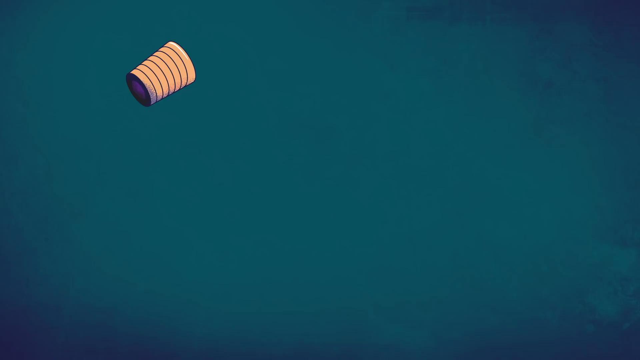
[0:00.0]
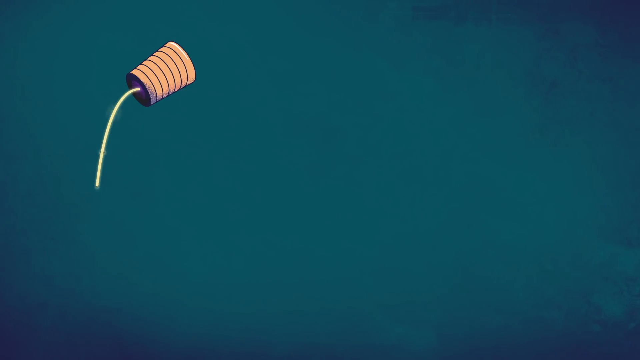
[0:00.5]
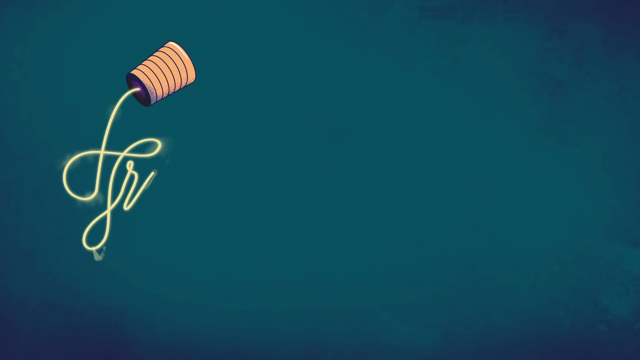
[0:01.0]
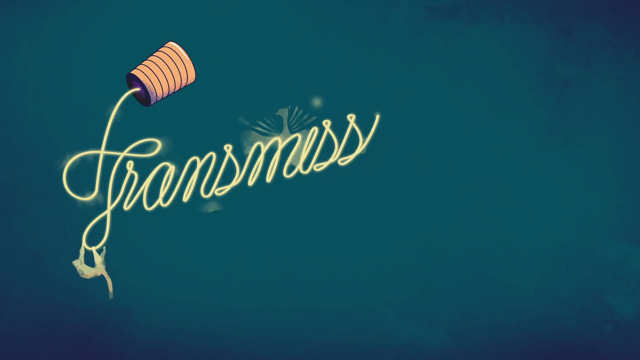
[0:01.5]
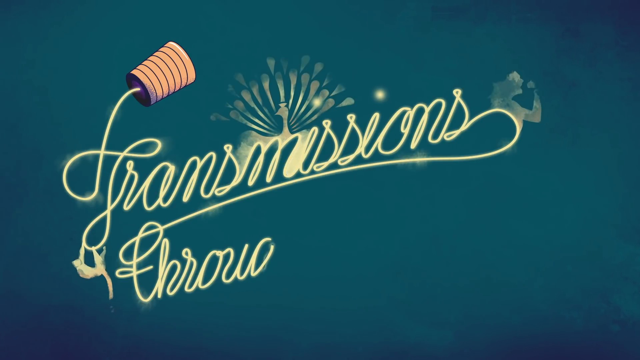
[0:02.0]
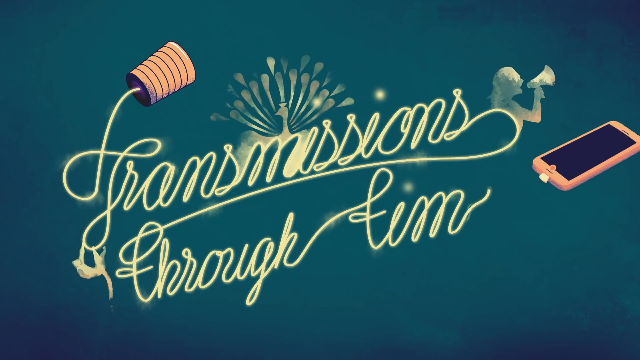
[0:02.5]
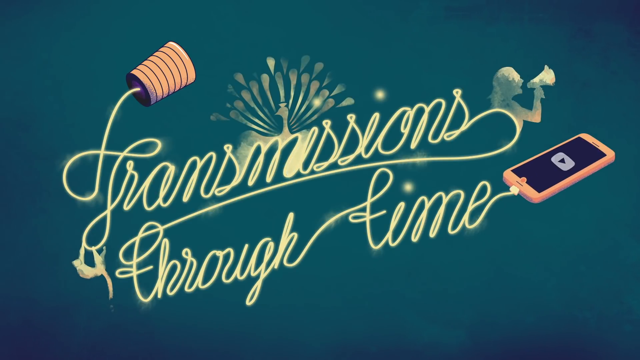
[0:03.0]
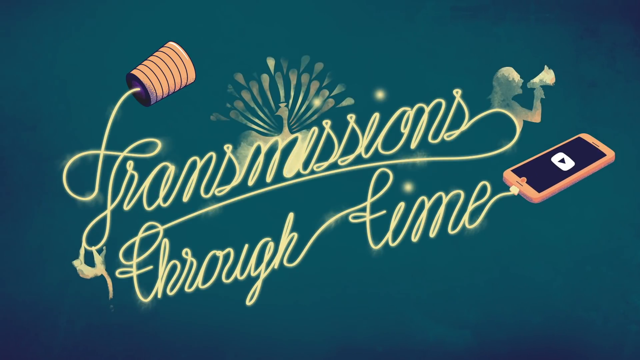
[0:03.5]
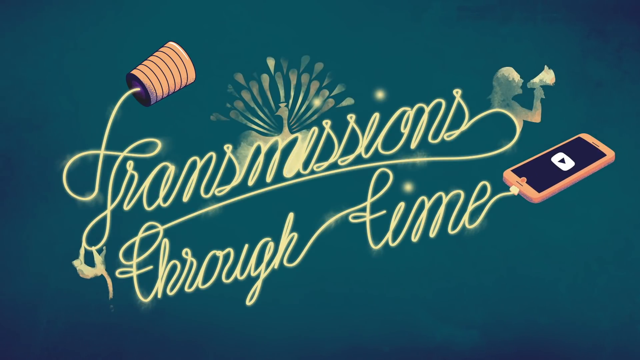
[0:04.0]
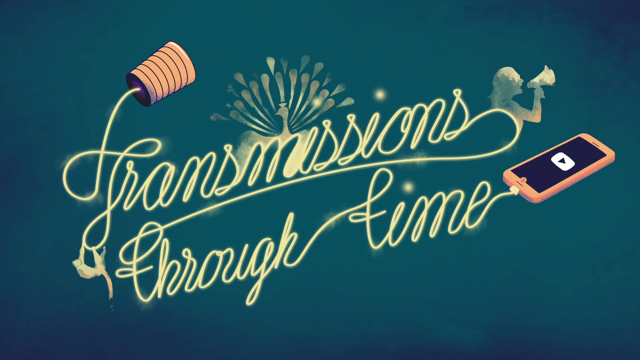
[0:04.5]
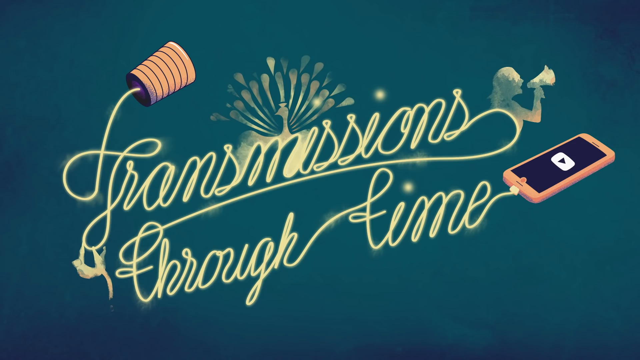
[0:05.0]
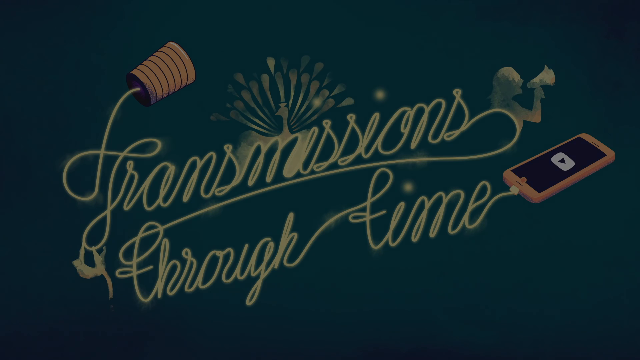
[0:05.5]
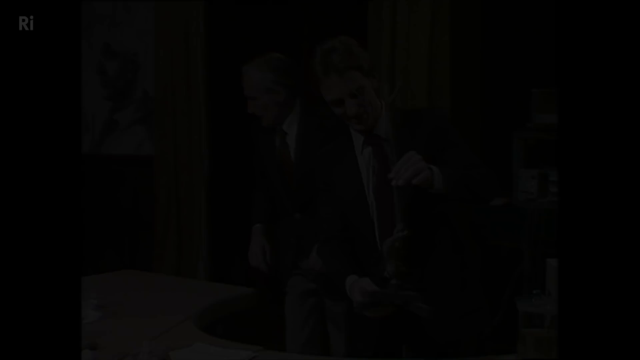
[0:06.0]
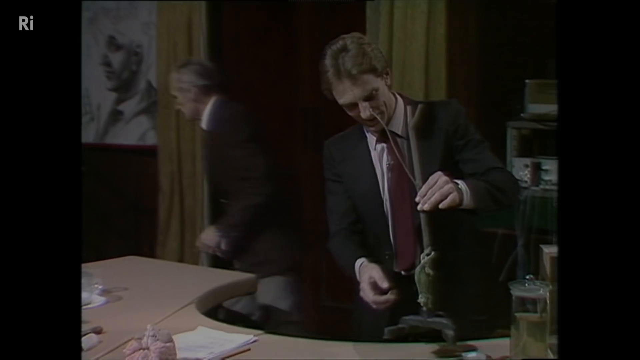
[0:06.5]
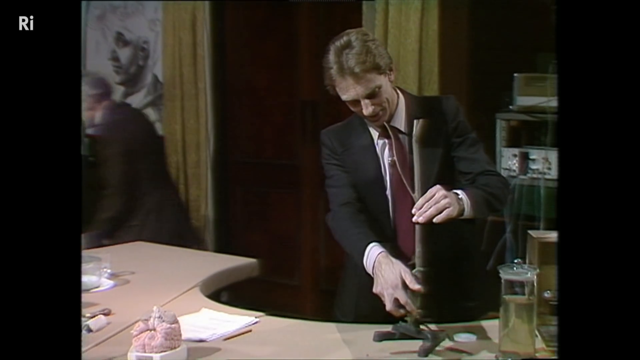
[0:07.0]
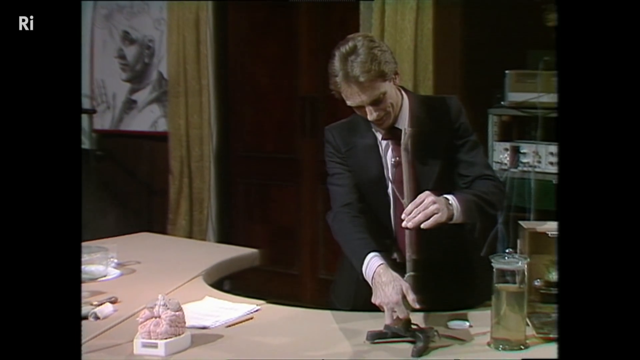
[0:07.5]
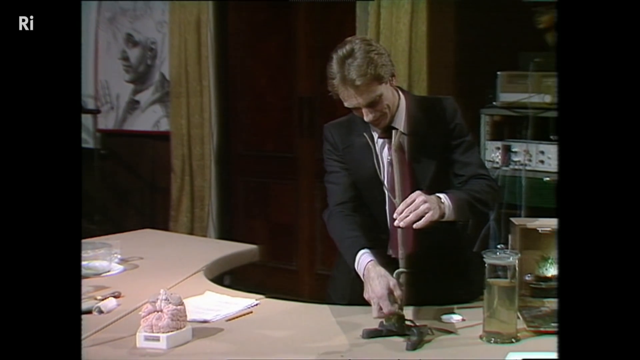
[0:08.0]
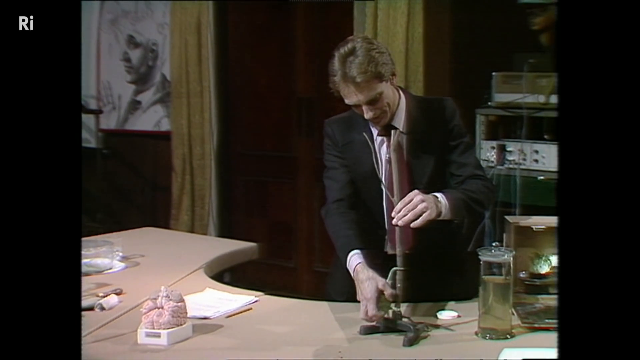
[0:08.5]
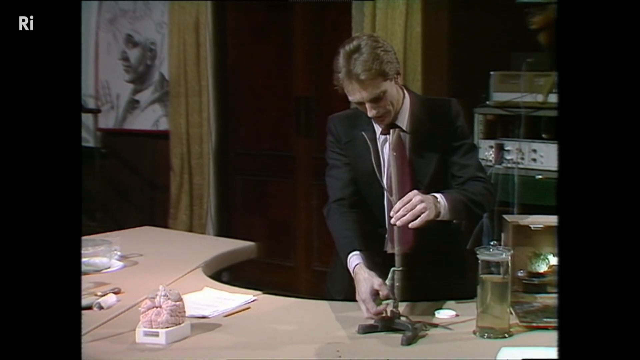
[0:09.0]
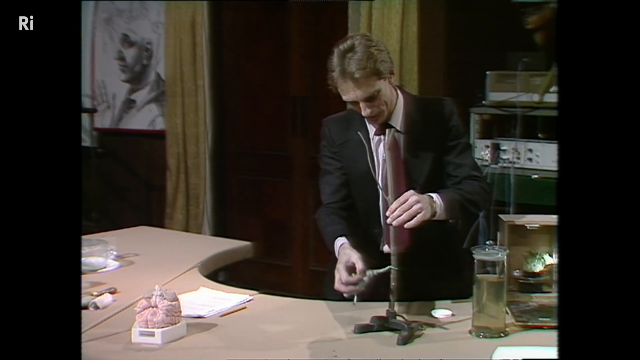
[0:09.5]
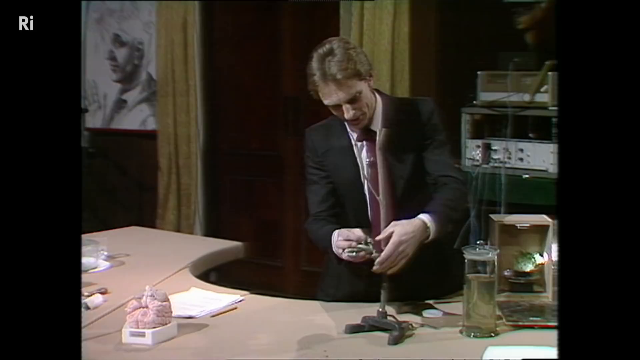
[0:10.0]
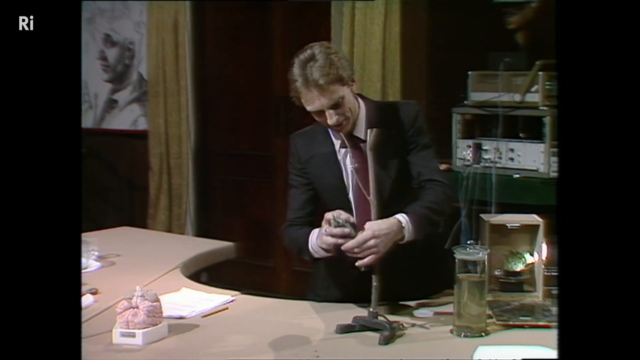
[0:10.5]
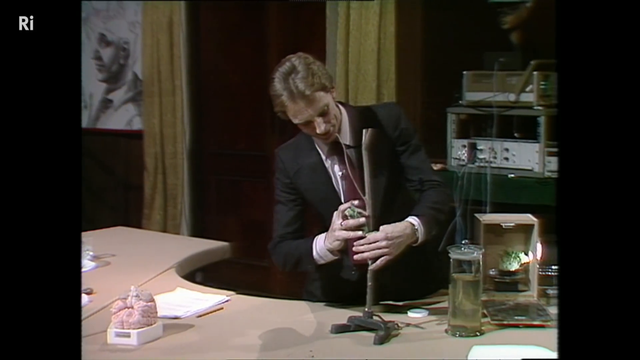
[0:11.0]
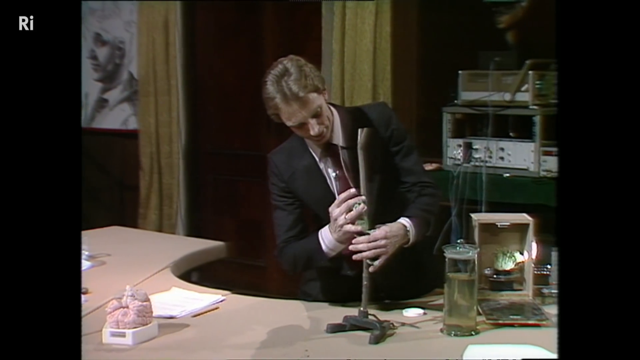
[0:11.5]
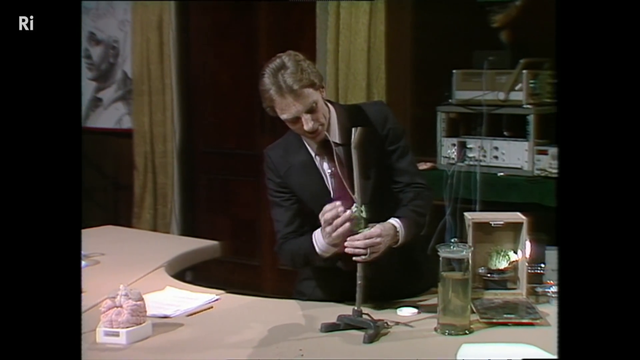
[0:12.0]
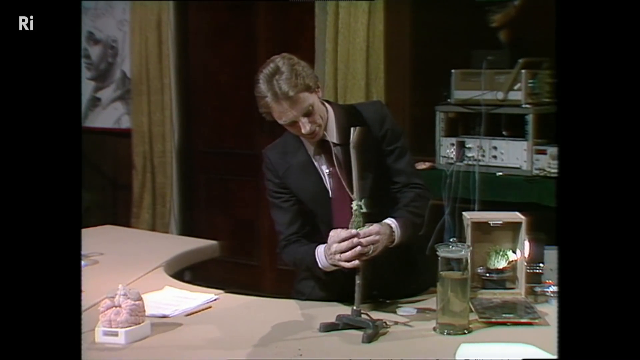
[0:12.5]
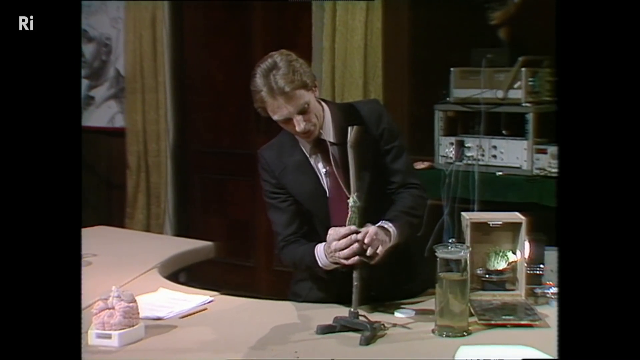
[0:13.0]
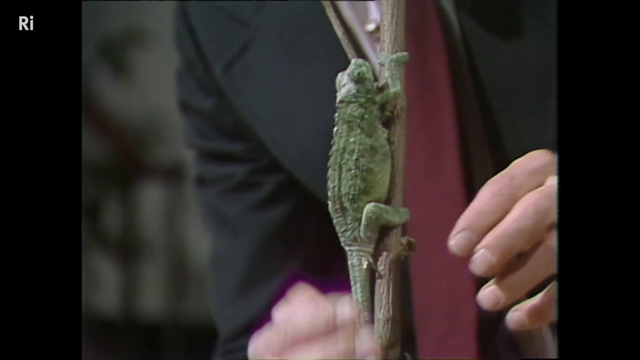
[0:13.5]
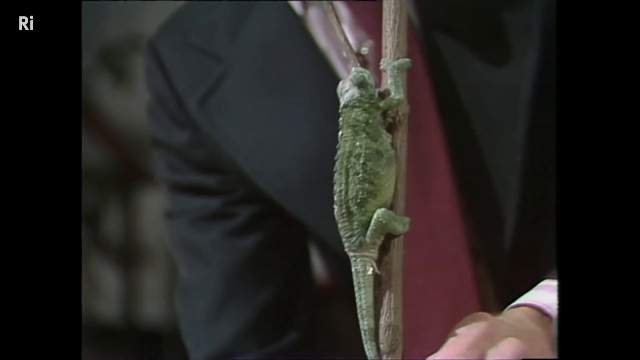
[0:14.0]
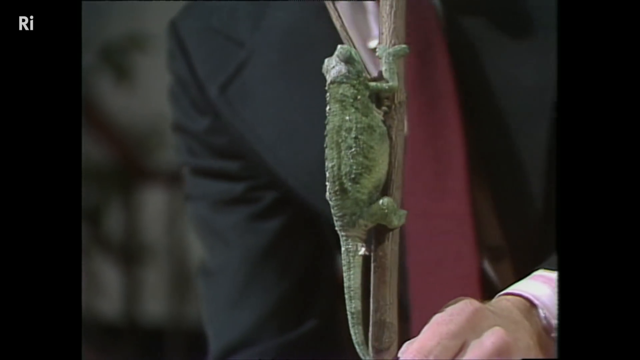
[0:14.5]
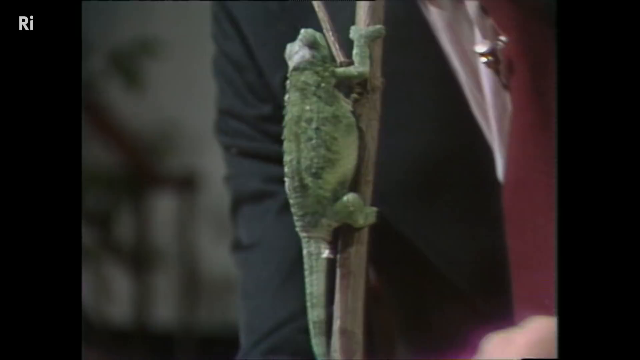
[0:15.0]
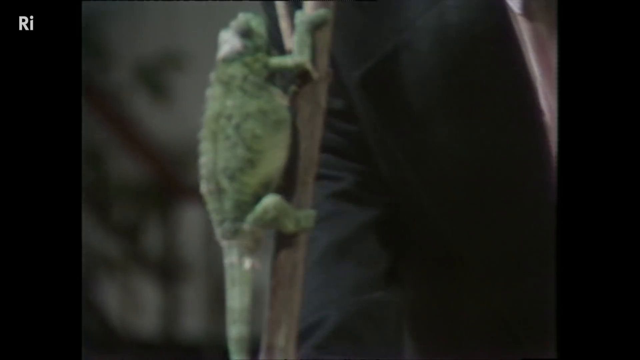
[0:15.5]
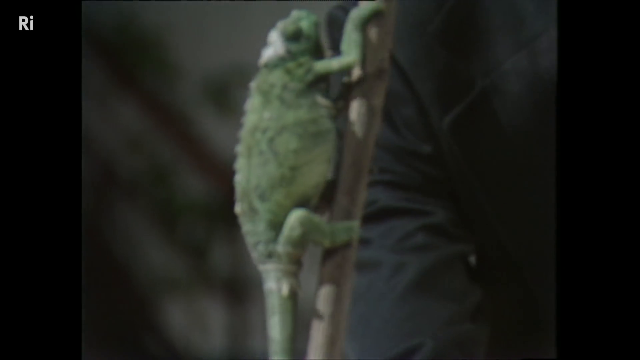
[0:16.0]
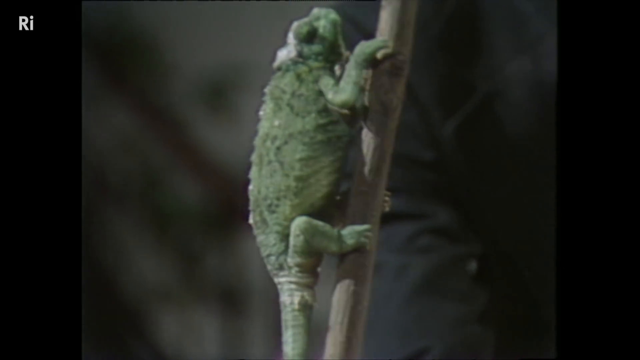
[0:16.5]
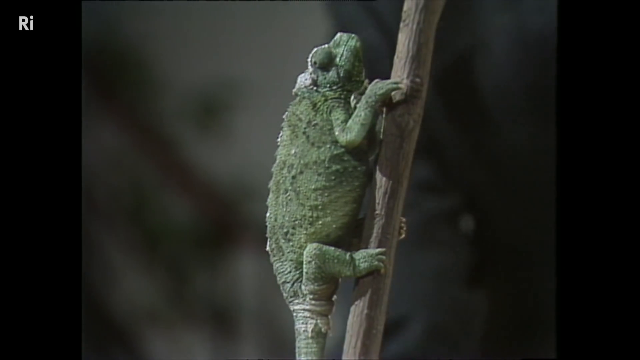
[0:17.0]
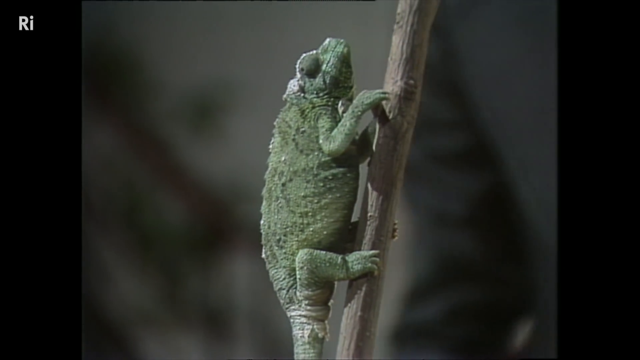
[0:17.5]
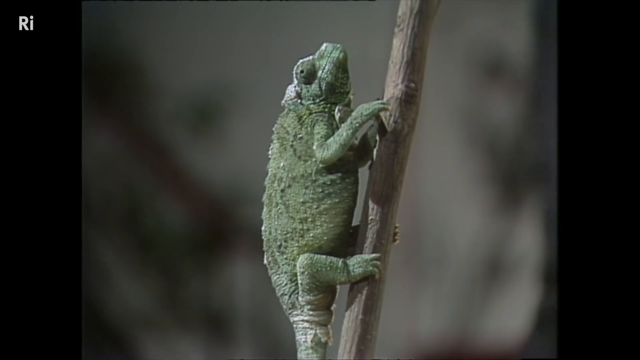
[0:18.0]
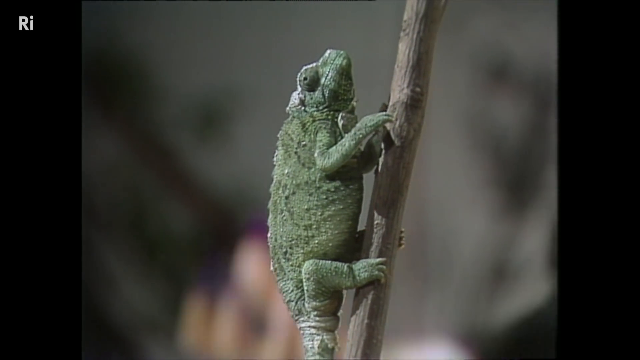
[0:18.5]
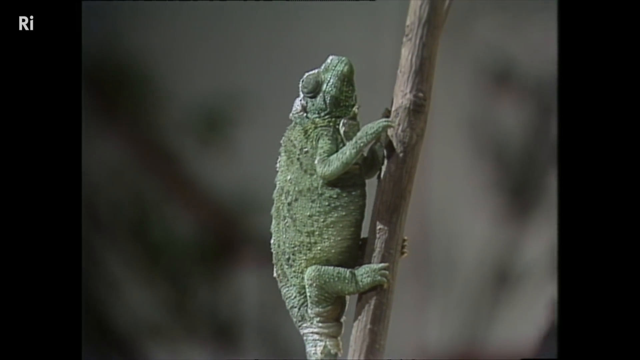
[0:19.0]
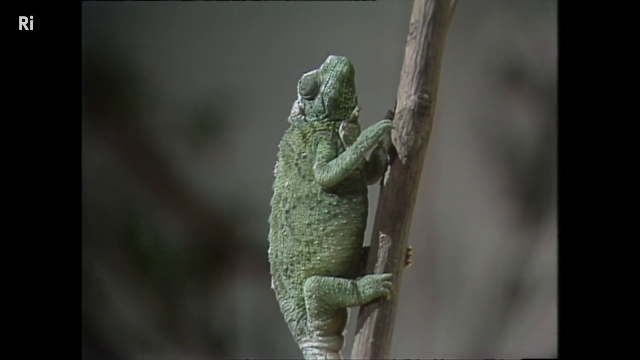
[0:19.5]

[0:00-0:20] A cartoon intro opens on a dark blue, dark green teal background. Italic text appears reading "Transmissions Through Time," with a faux pink iPhone to the right. The iPhone plugs into the end of the text as if the text is an outlet or a phone charger. The scene transitions to a man in his workshop or lab, working on a stick that is held up, and he places an iguana onto the stick. The man wears a dark black suit with a white shirt underneath and a red tie. The camera zooms in to an up-close shot of the iguana on the stick that the man is holding, focusing on the iguana as the background becomes blurred. The camera continues to pan in slowly on the iguana while the background stays blurred.